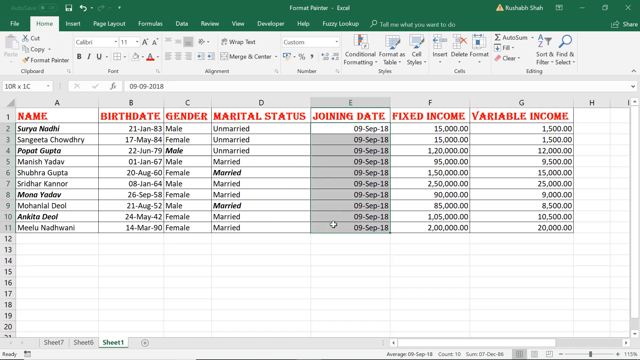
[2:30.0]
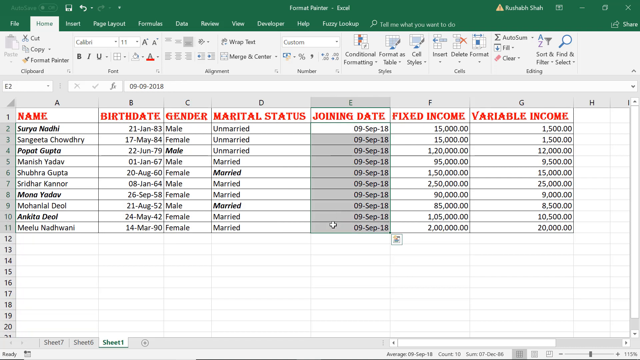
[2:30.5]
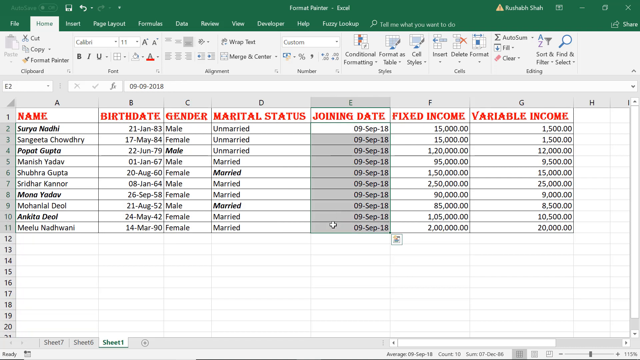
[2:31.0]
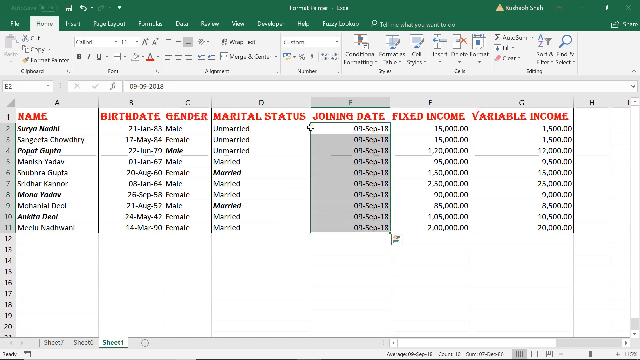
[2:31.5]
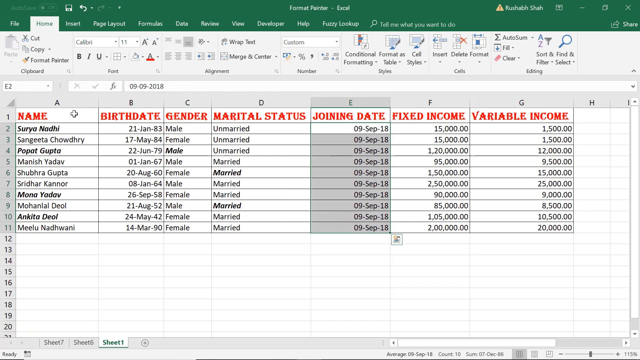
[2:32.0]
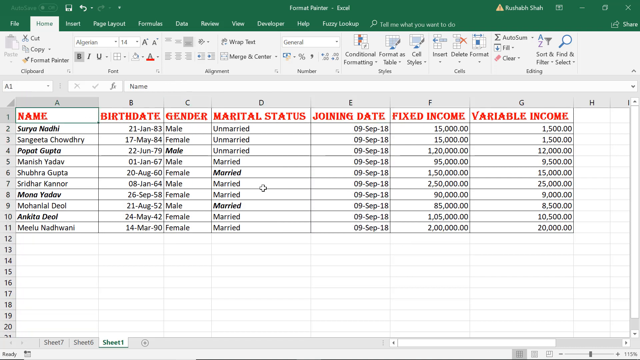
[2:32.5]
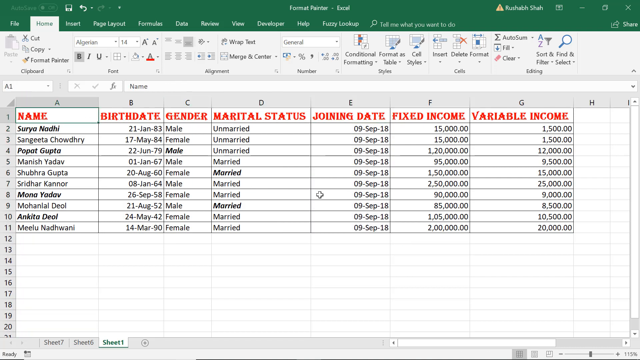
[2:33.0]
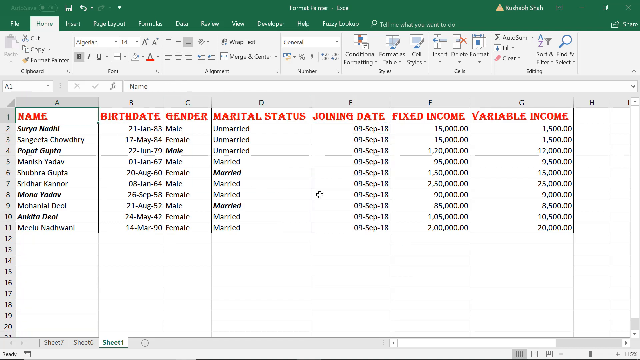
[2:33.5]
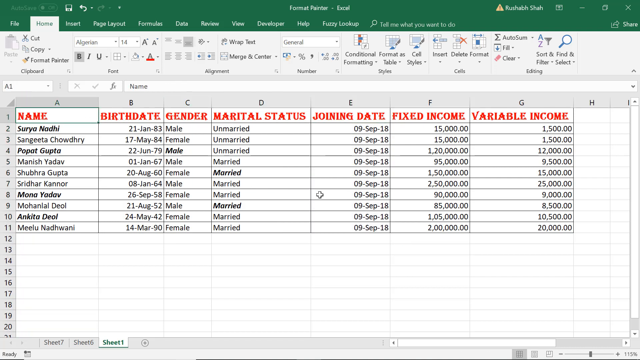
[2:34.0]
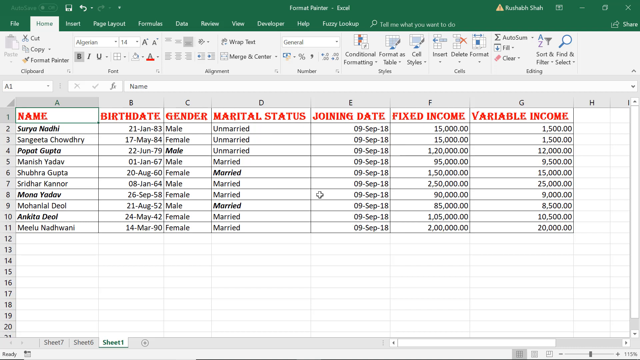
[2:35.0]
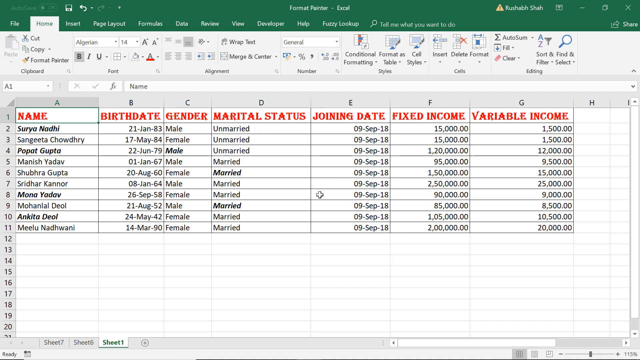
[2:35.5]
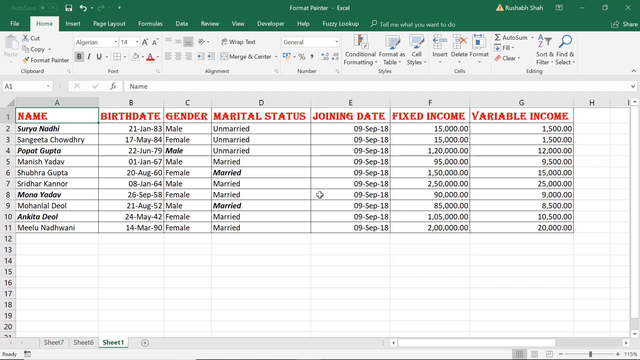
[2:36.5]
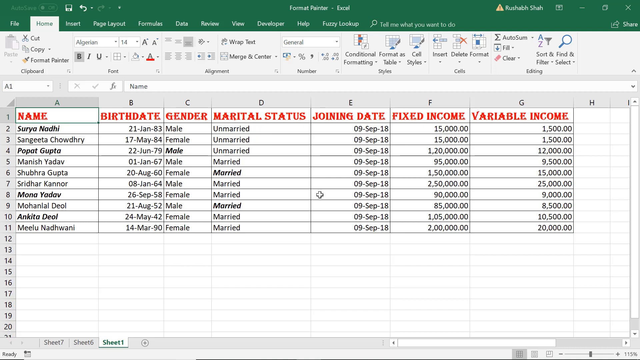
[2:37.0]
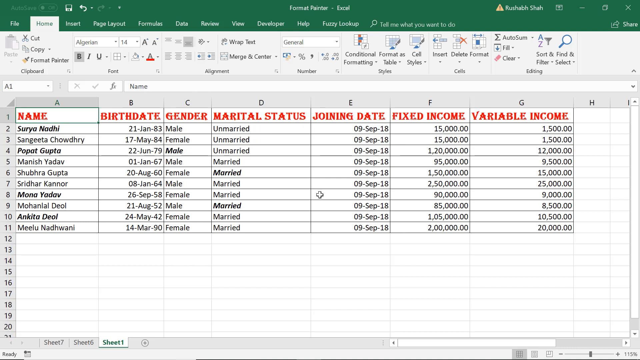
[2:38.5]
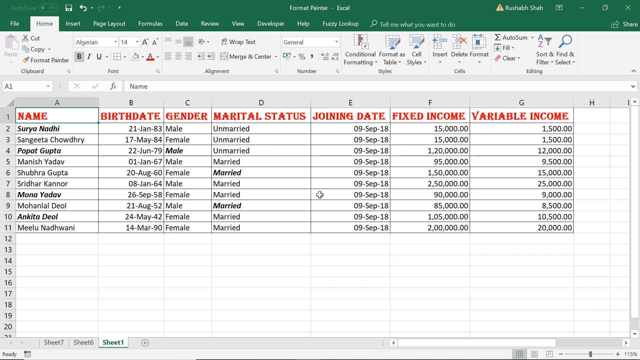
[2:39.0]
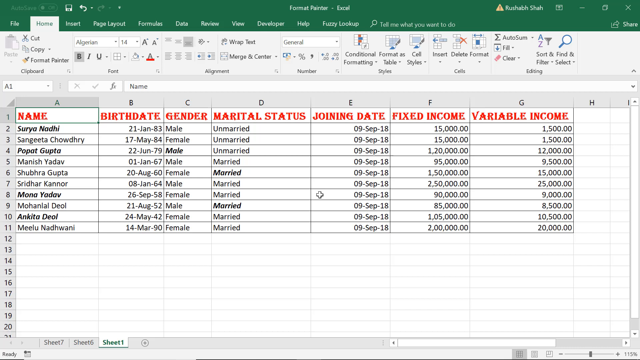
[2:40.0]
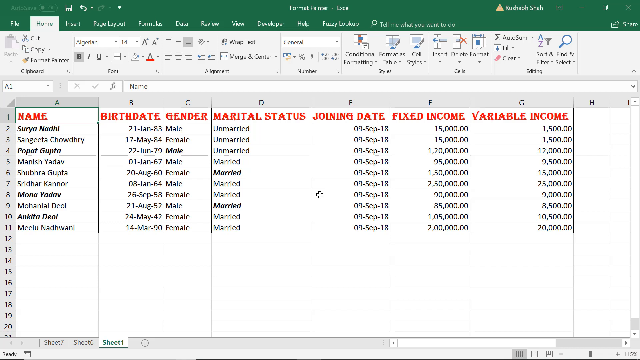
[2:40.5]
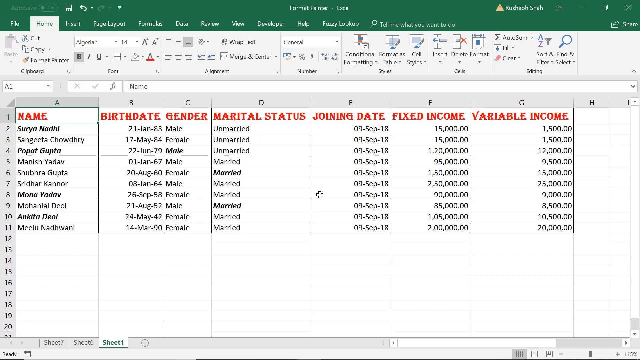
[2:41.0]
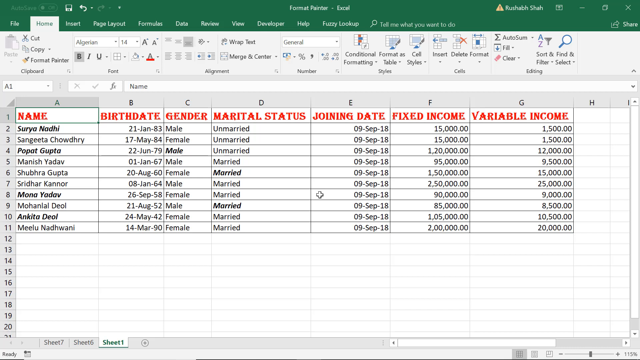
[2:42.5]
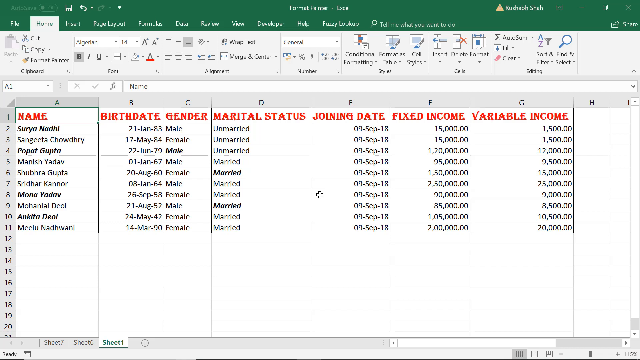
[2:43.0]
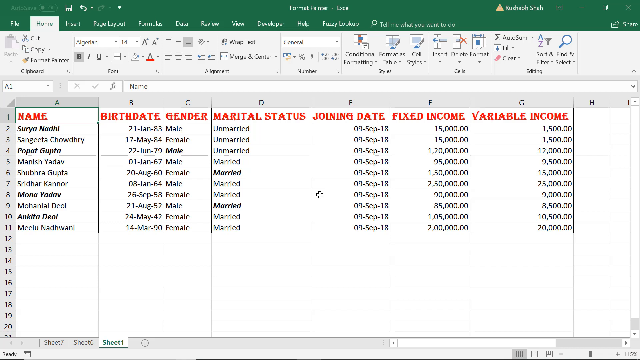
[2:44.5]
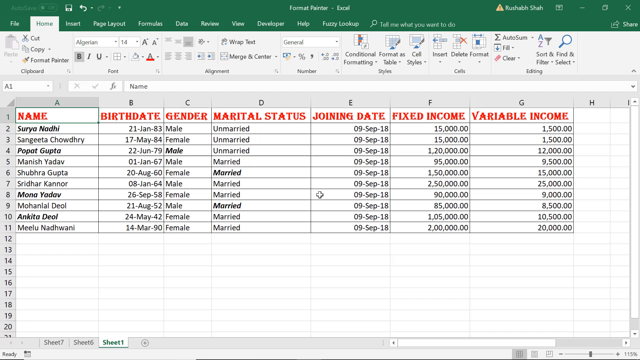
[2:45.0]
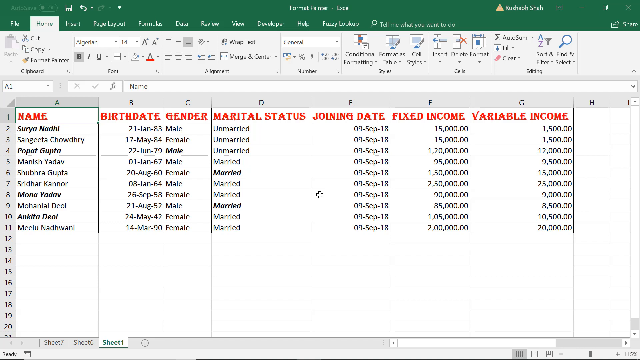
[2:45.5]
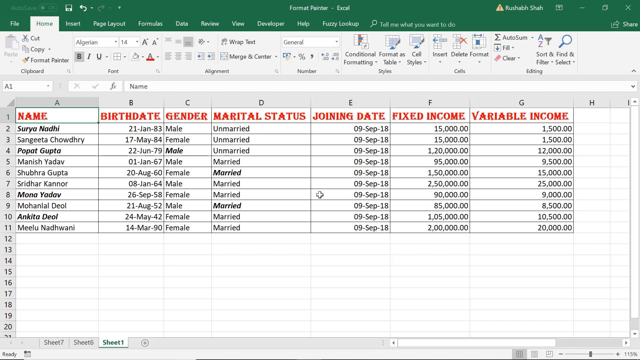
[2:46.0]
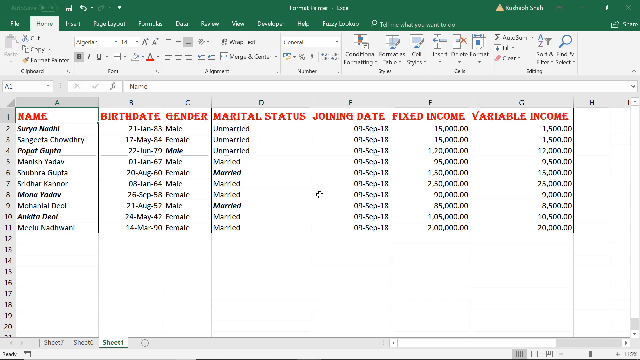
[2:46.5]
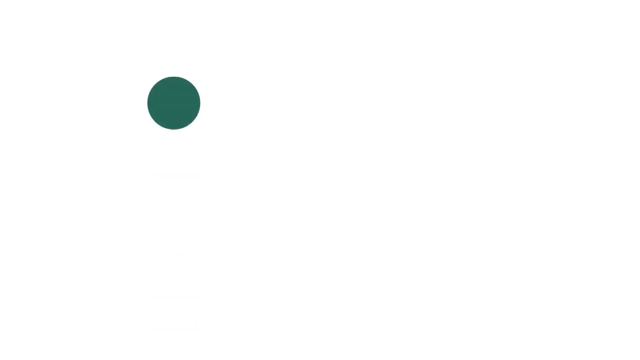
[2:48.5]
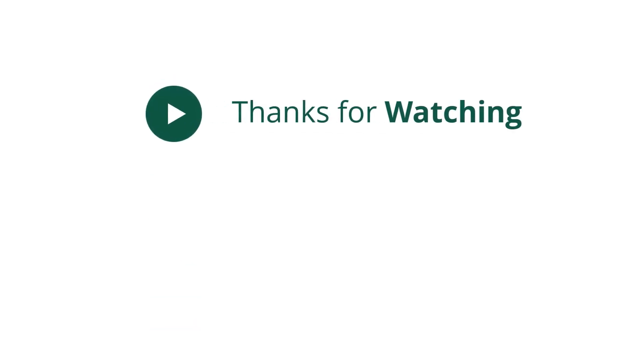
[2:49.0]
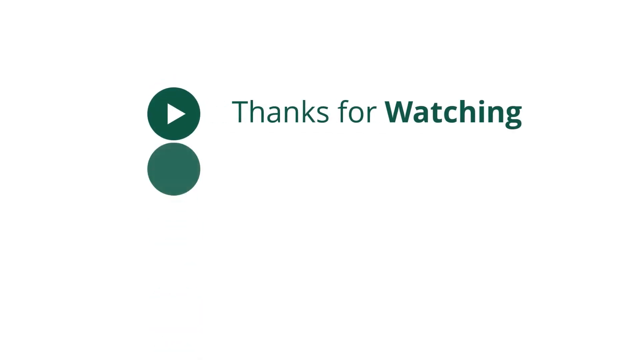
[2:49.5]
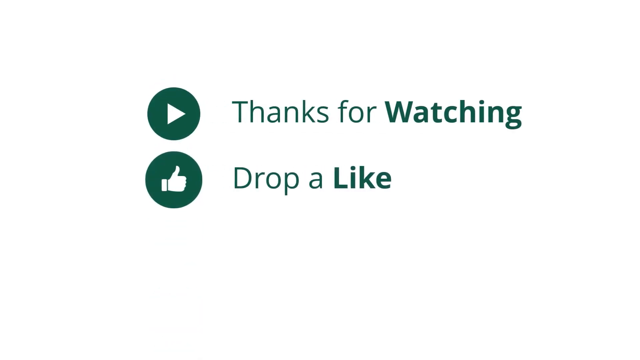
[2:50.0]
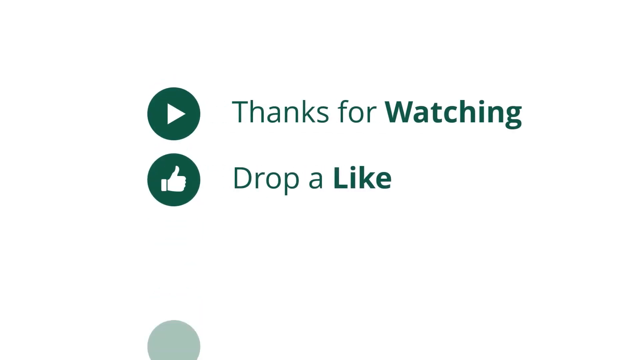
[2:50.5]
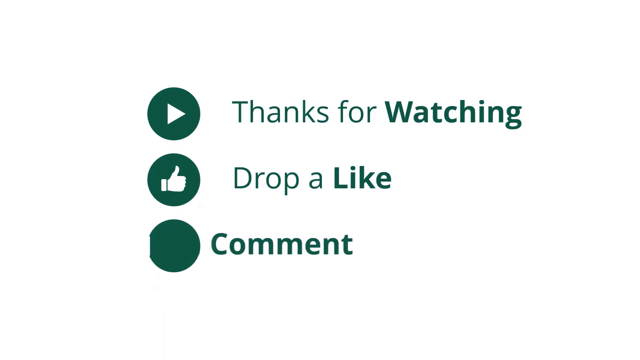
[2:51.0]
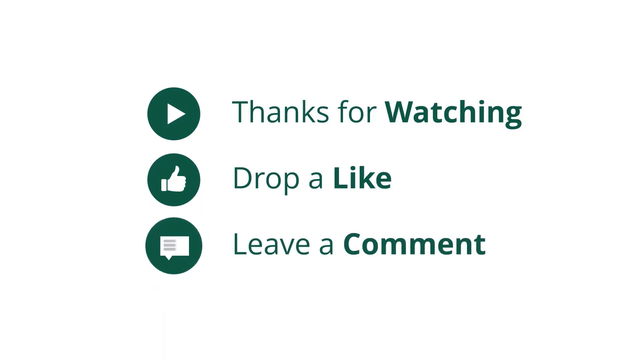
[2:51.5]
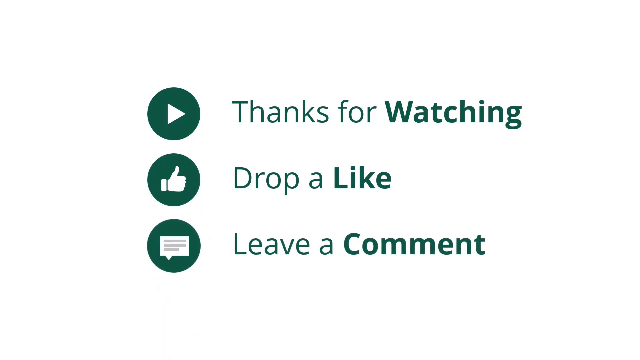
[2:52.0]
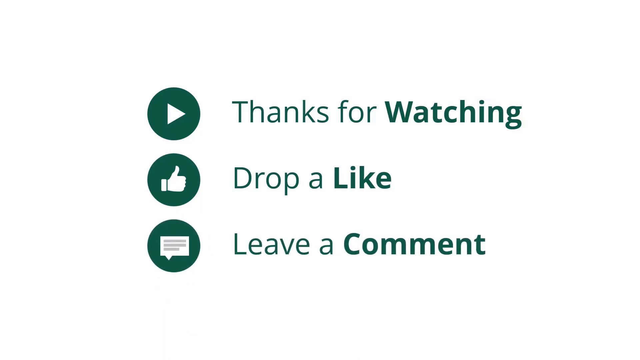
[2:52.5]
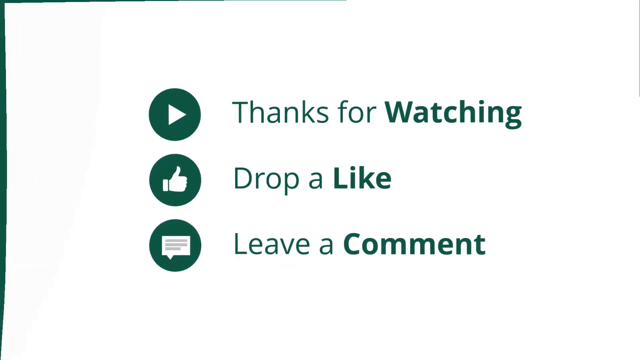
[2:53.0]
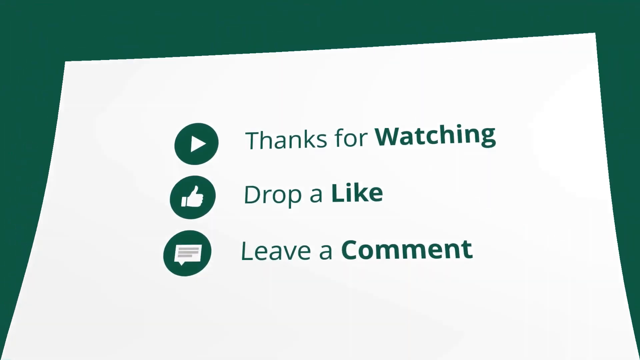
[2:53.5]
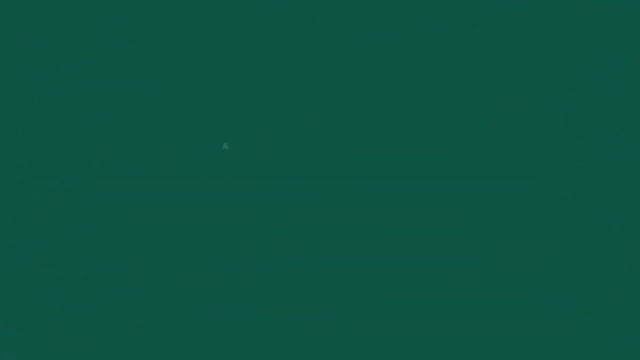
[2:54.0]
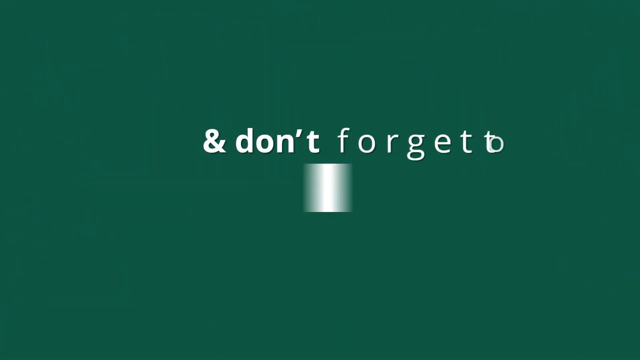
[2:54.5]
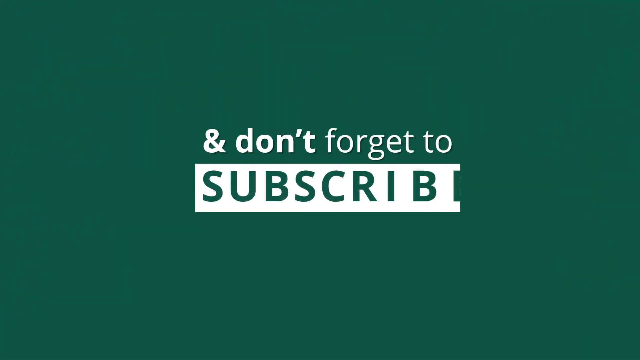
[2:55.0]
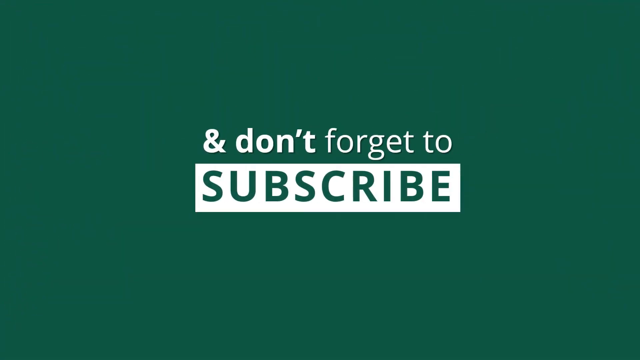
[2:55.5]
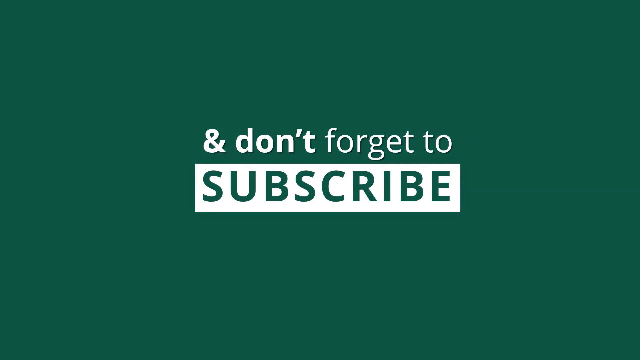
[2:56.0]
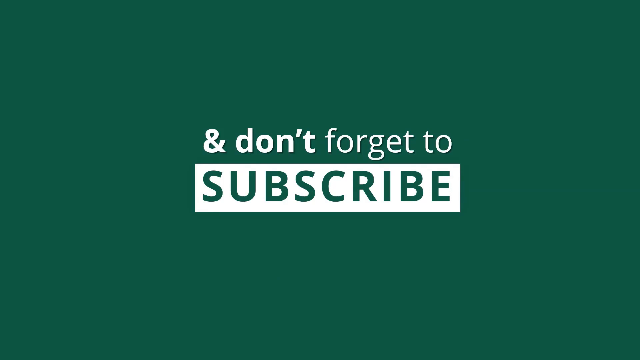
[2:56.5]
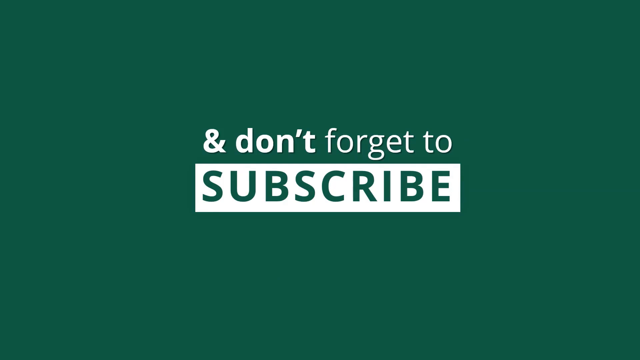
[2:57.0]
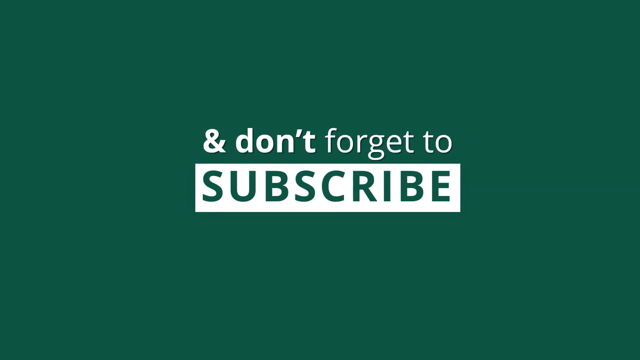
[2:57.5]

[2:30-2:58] The user continues changing the font with the Format Painter tool. It looks like all of the column headers, A through G, have been changed from the standard black font to the Algerian font at 14 points in red: name, birthdate, gender, marital status, joining date, fixed income, and variable income are all in red. No further activity happens, and the video appears to close out. A green play button reads "thanks for watching", a green thumbs-up button reads "drop a like", and what looks to be a text icon reads "leave a comment". Finally, white text on a green background reads "and don't forget to subscribe".